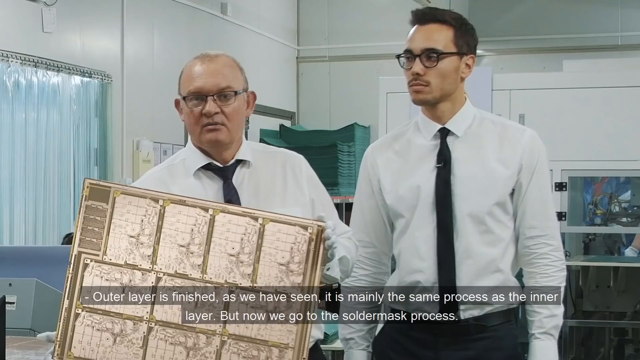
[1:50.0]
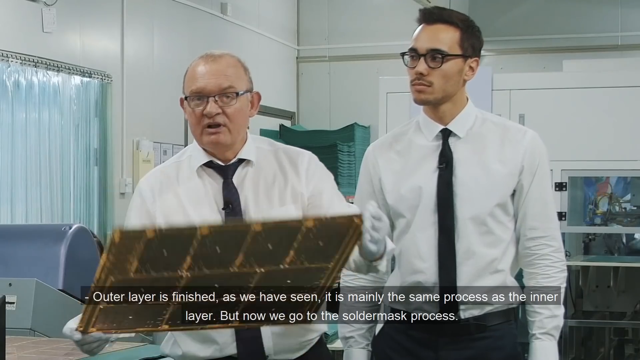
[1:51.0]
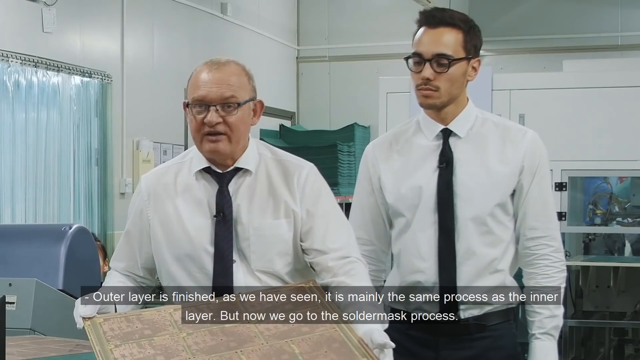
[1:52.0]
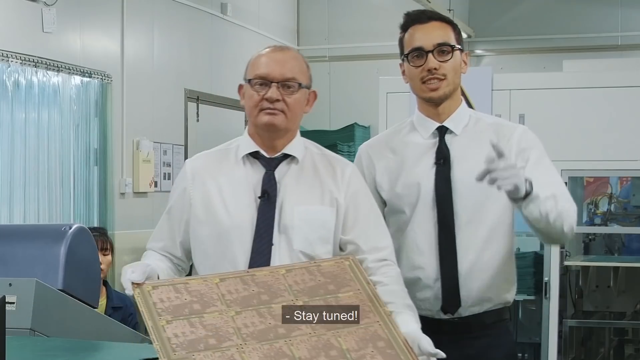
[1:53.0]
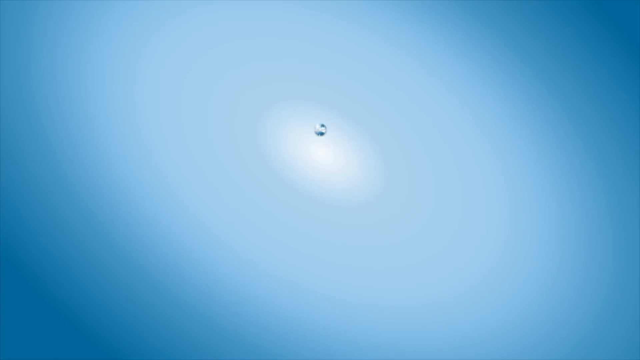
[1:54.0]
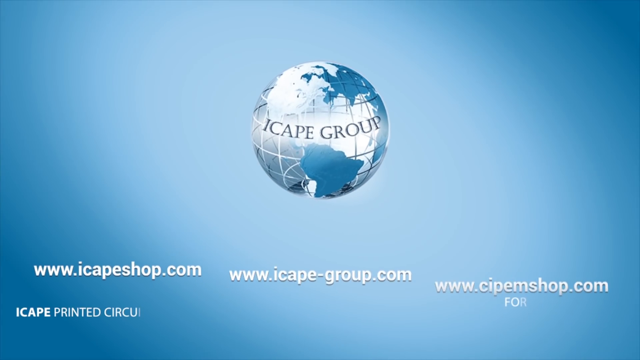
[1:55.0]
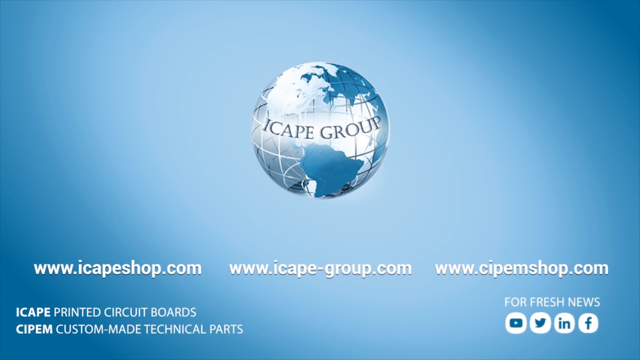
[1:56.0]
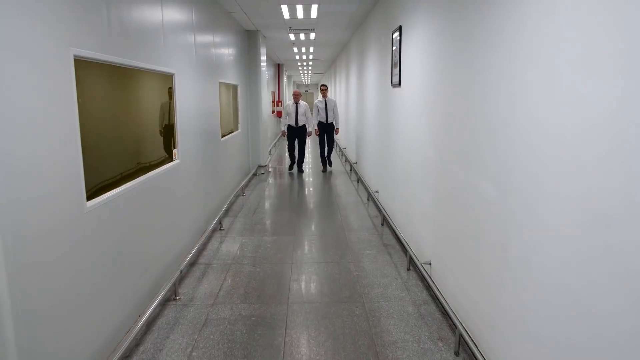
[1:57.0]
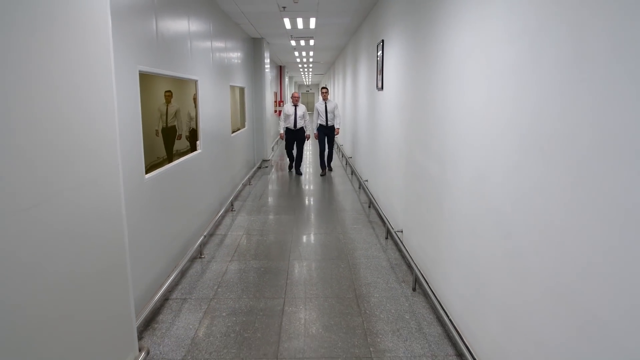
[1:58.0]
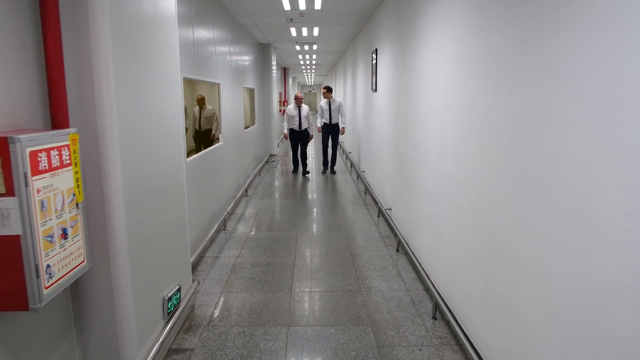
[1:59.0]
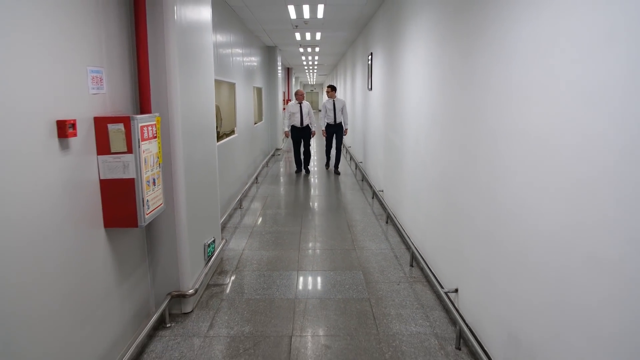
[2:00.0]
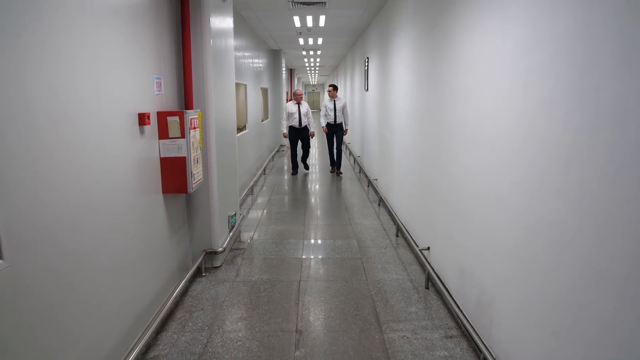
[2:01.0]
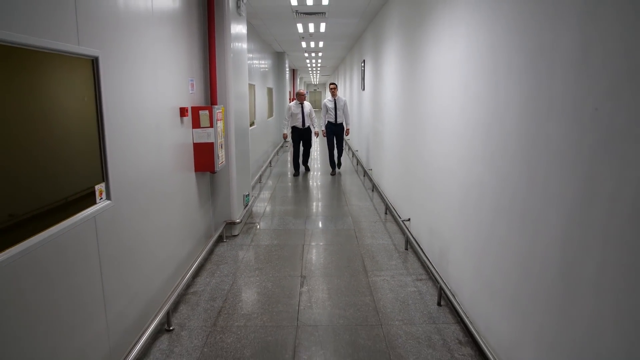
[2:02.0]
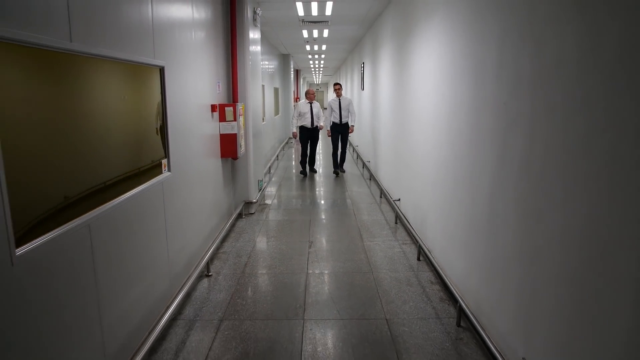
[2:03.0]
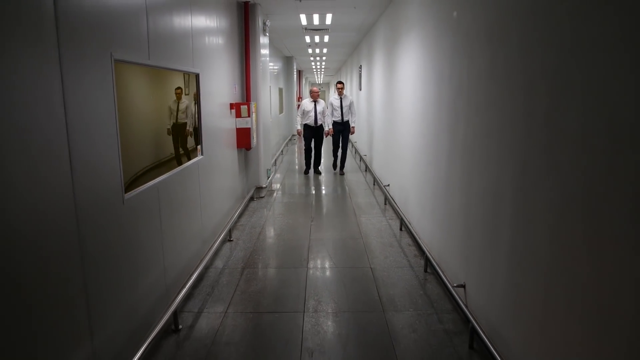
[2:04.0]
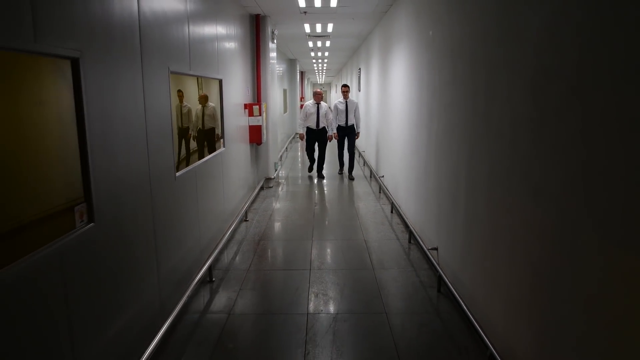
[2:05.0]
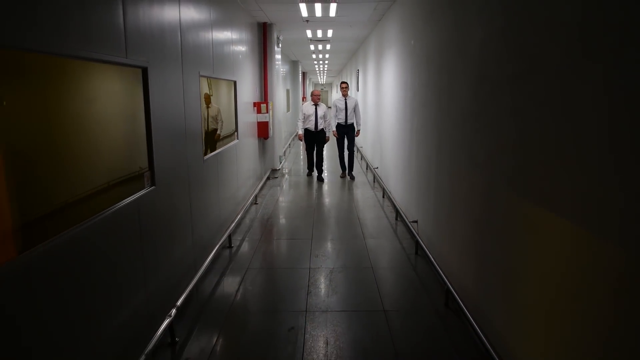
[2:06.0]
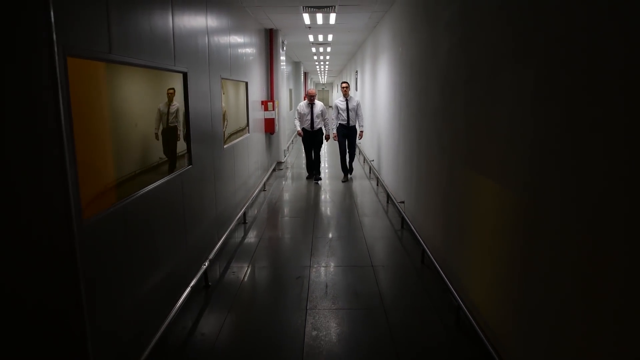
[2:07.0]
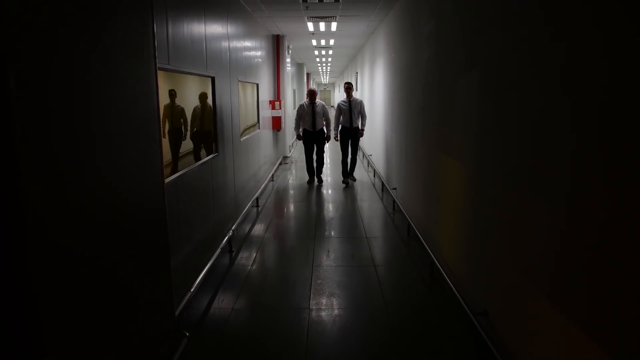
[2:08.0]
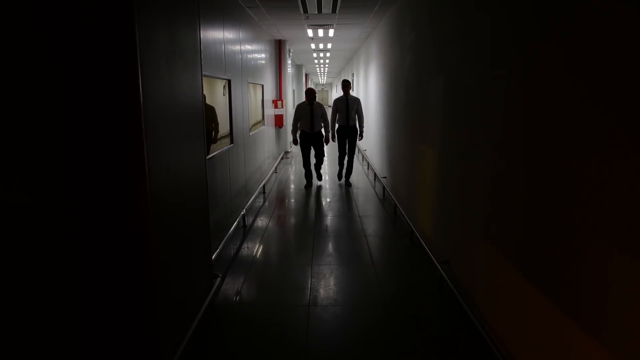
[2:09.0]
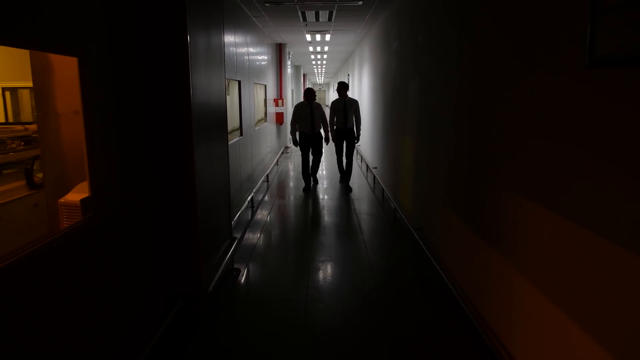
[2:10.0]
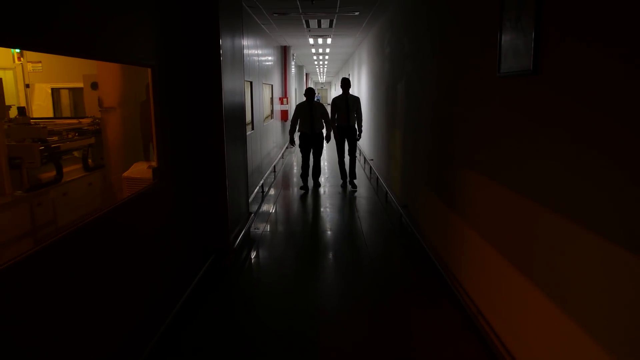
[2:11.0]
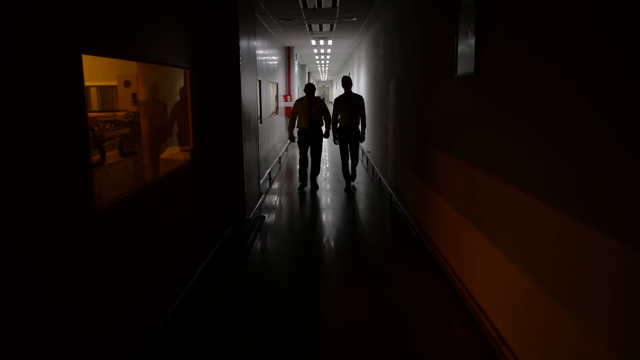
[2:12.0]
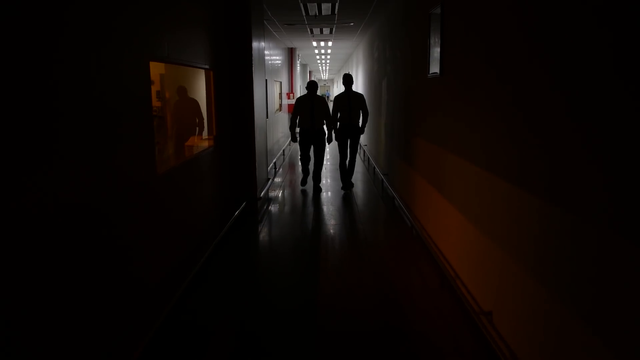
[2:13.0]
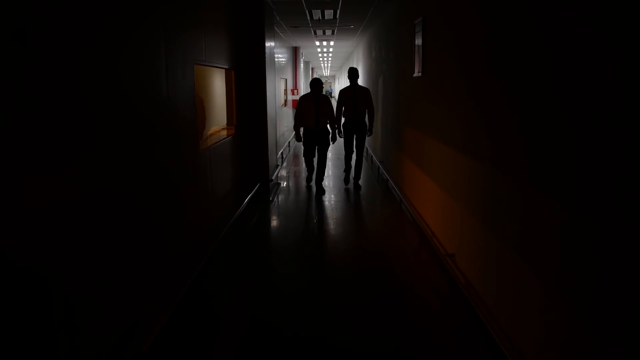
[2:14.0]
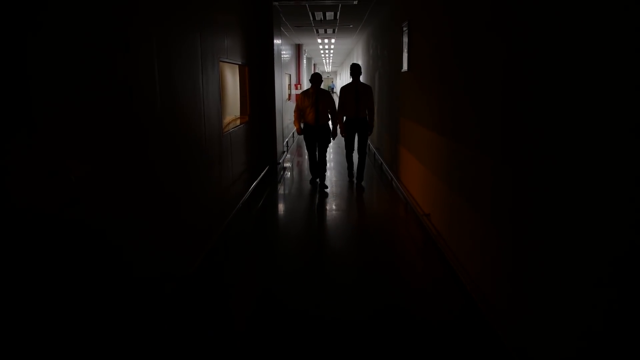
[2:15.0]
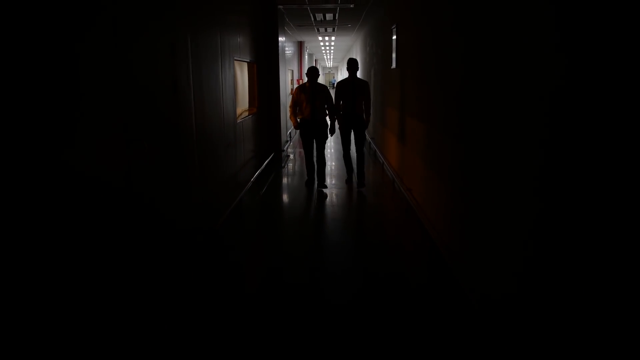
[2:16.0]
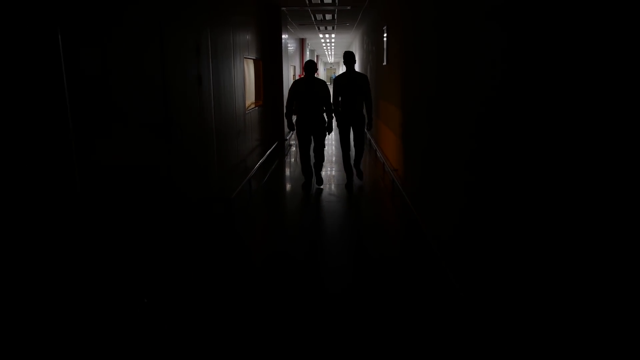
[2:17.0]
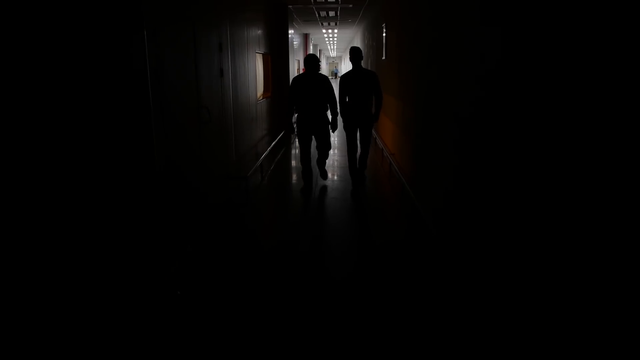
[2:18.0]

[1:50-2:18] One of the men holds the board and the other says "stay tuned". The video transitions to the map of the world with "iCape Group" superimposed on it and the websites "iCapeShop.com", "iCape-Group.com" and "CIPEMShop.com". It then shows the two men walking through the fabrication plant down a long white corridor with overhead lights. They reach a section where the overhead lights are switched off, making the corridor virtually pitch black, and through glass areas the fabrication plant process itself can be seen. The video ends there.